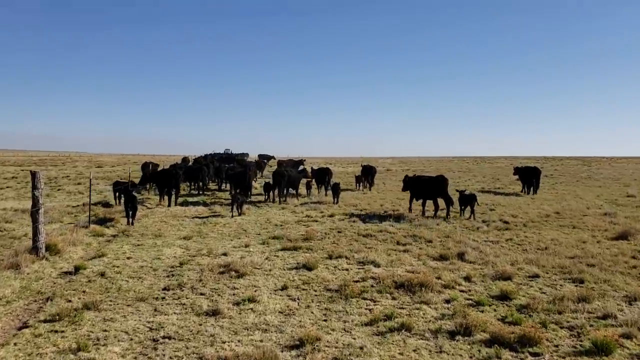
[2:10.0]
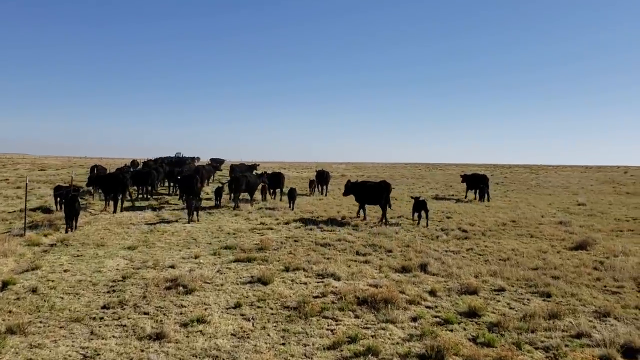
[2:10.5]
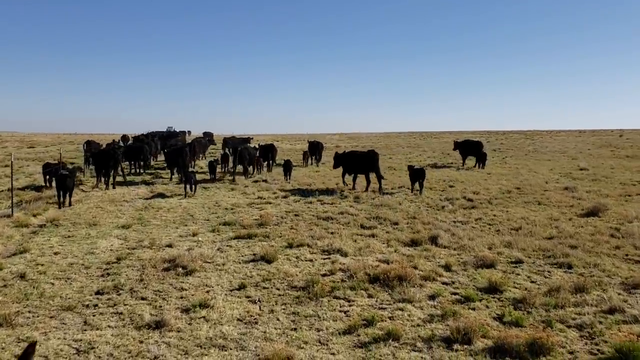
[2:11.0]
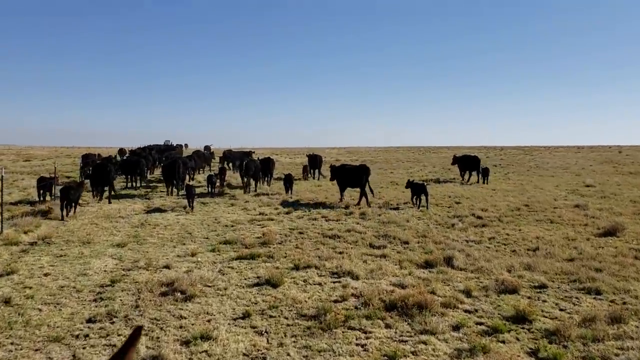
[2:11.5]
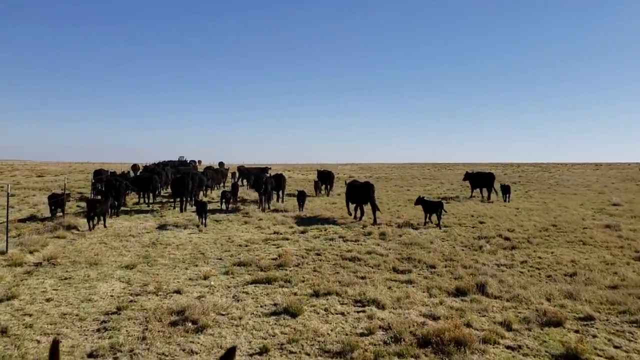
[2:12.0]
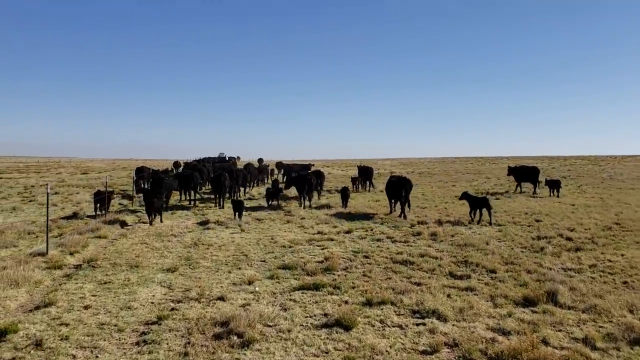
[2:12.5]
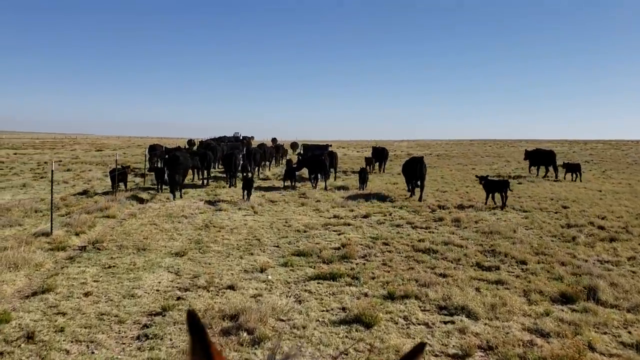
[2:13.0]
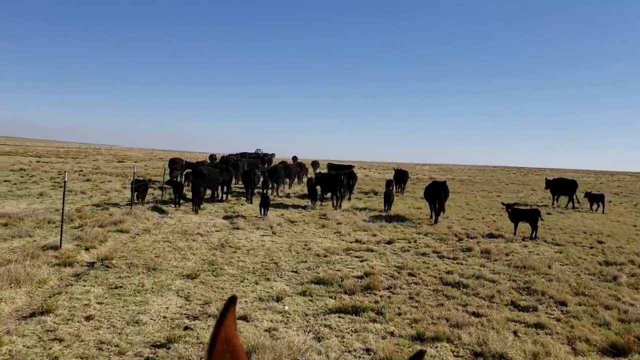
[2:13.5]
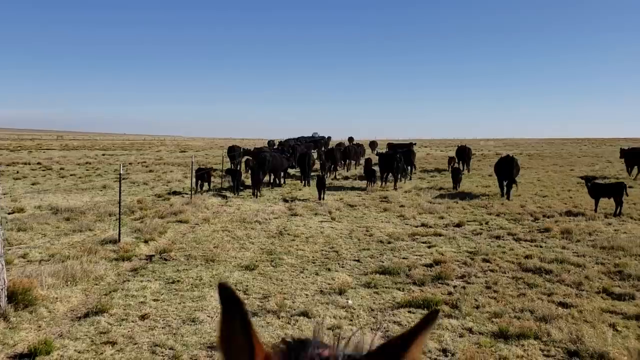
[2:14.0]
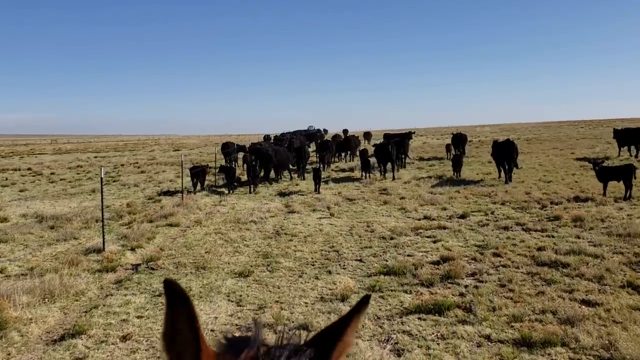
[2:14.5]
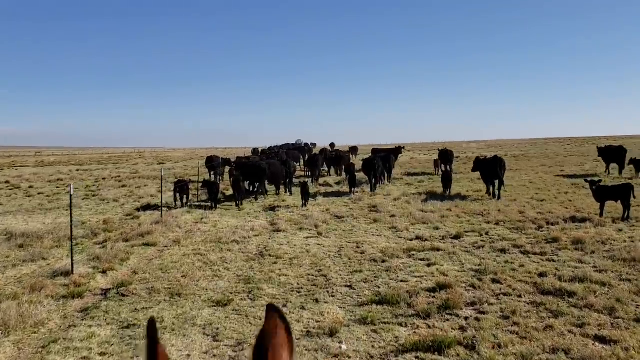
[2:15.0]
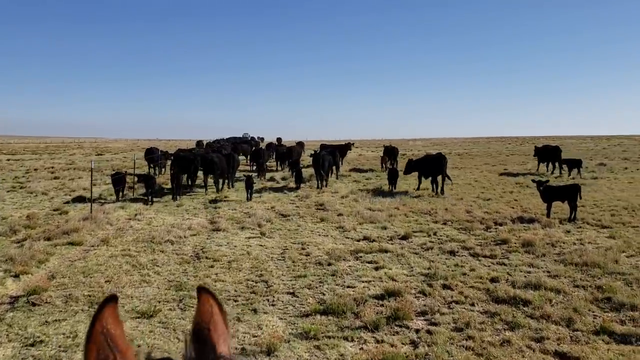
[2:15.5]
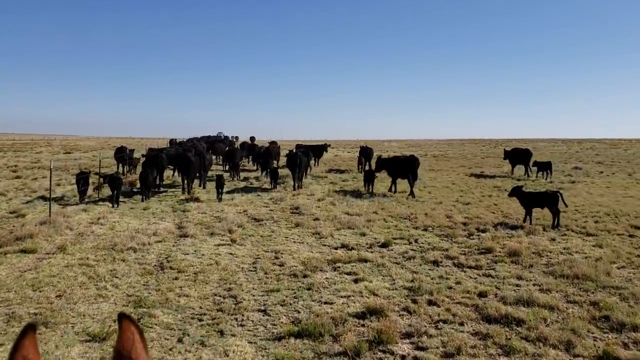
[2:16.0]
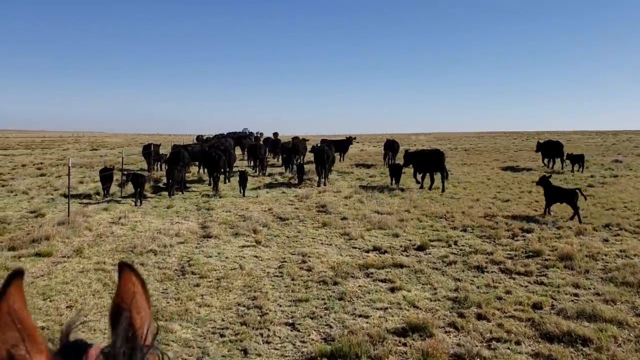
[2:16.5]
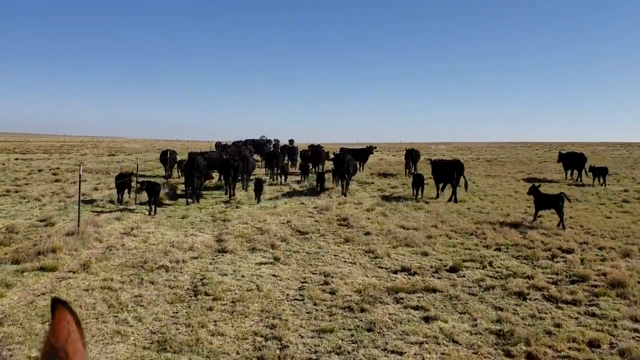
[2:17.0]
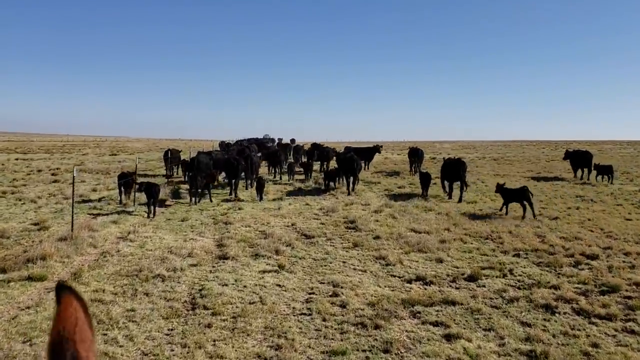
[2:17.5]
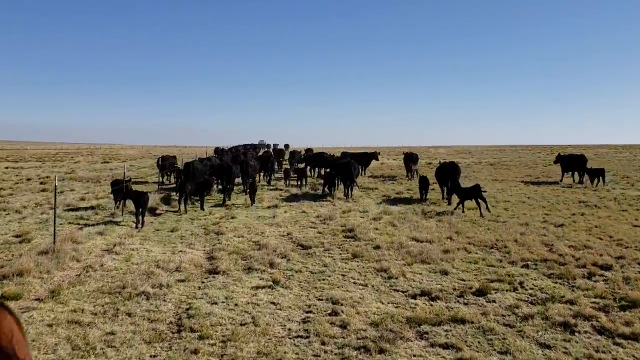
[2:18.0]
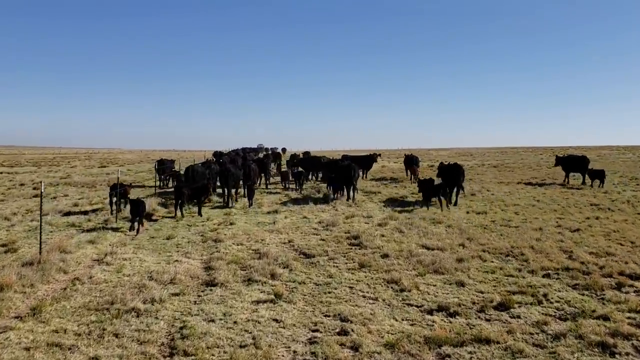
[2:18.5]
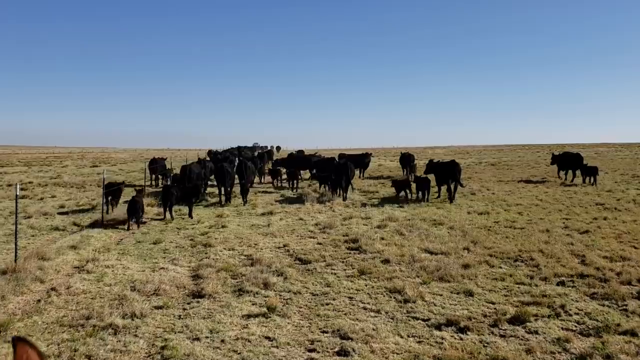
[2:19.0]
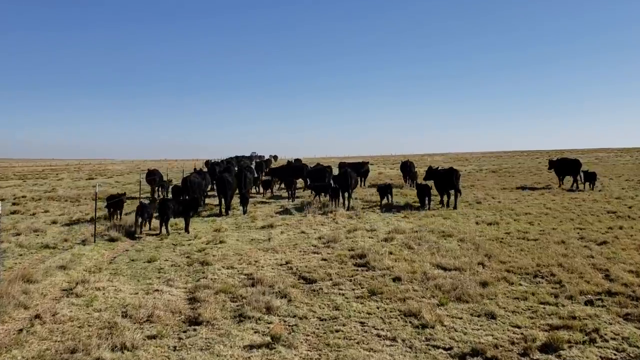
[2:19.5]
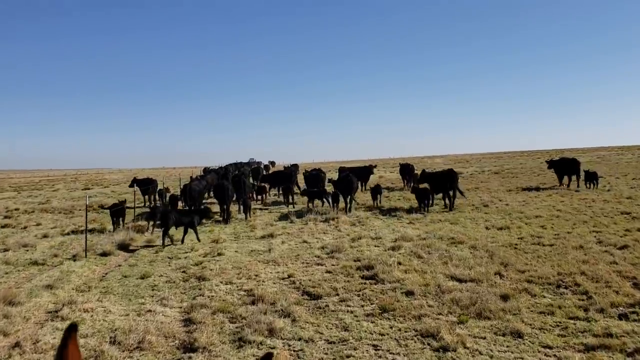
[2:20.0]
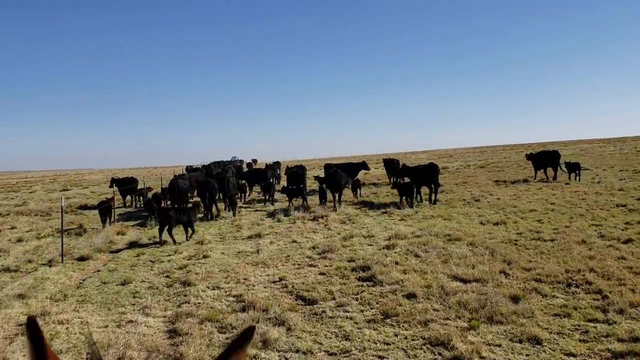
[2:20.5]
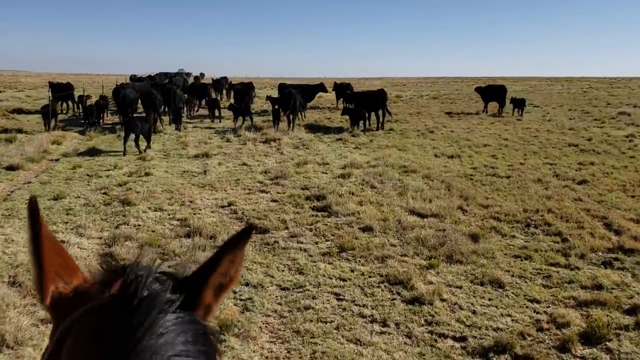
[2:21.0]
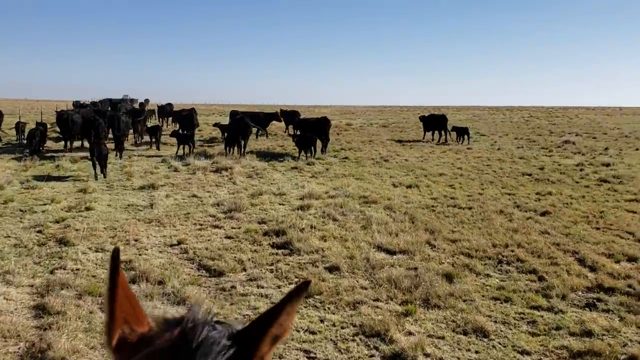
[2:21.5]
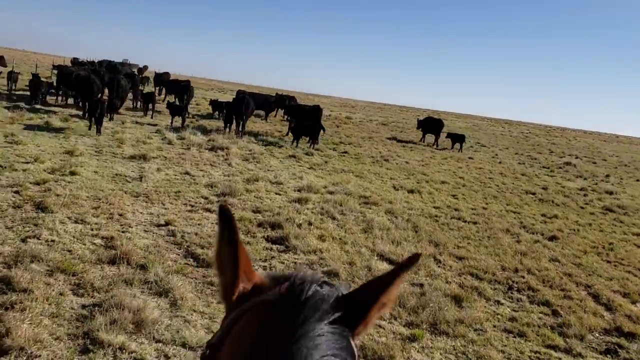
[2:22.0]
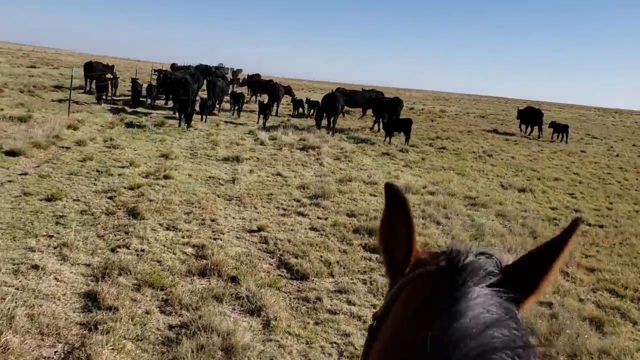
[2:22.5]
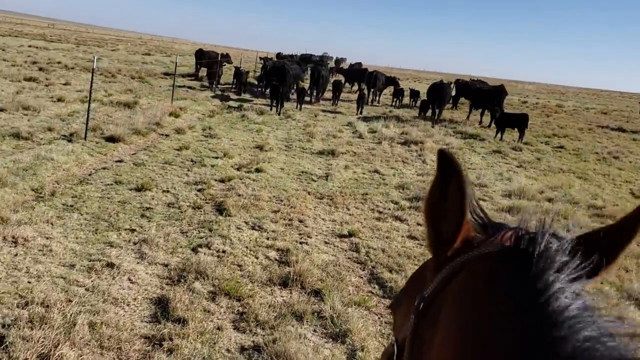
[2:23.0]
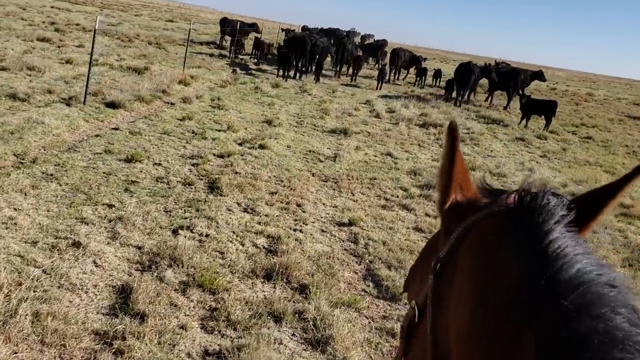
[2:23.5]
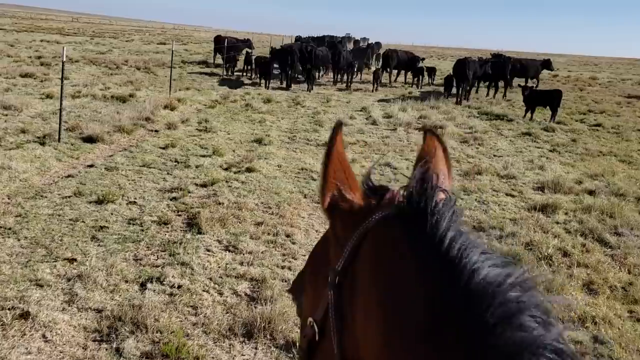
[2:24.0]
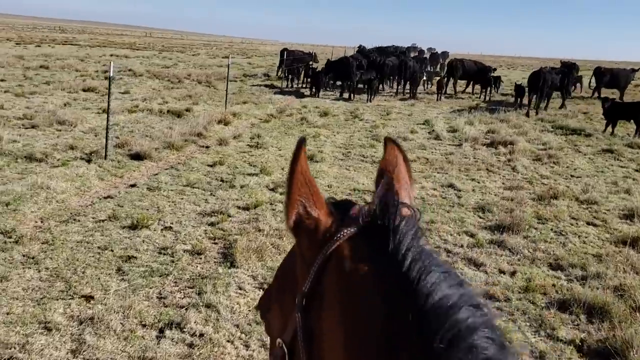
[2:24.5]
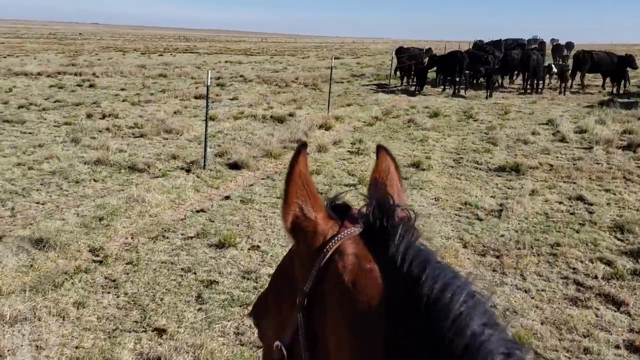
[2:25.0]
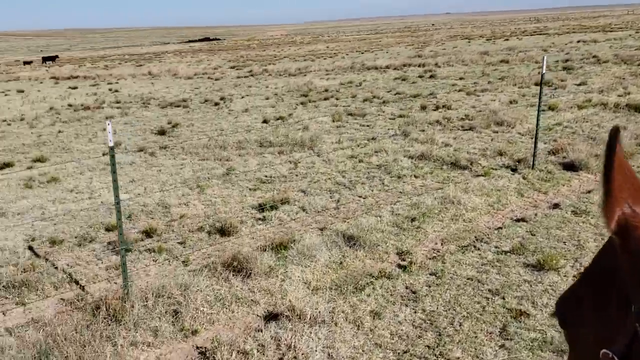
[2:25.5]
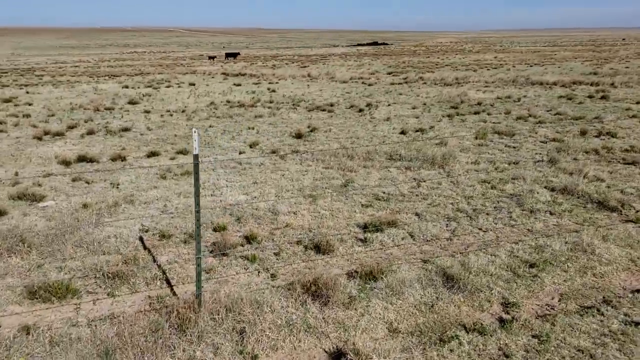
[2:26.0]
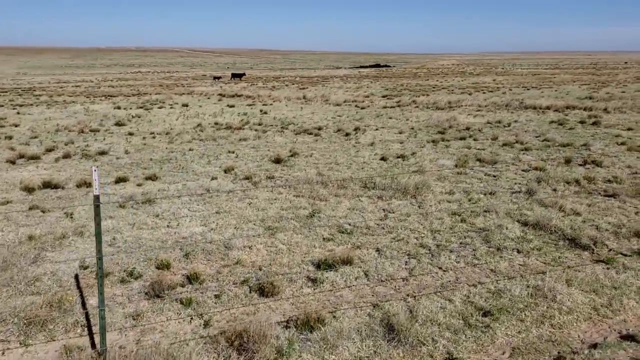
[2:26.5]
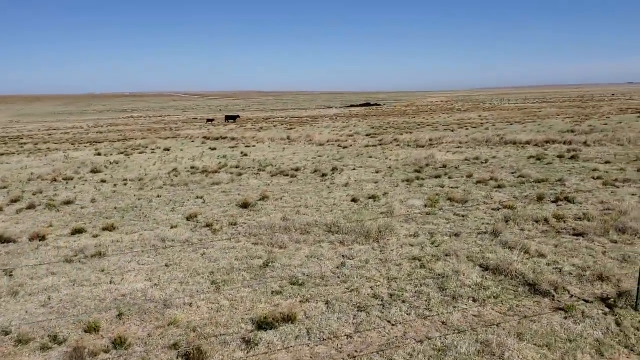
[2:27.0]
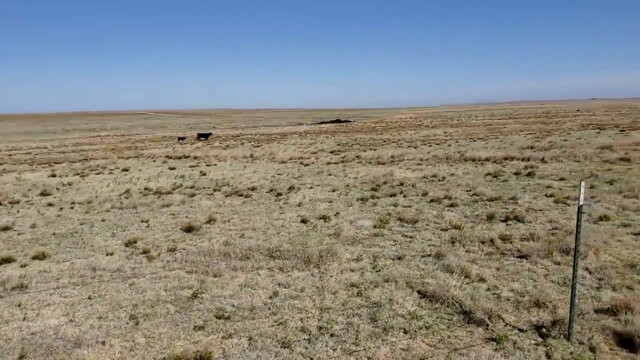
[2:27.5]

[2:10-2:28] The dog is out of sight, apparently going after a few cattle that could not keep up and are far behind. The formation seems to have broken a little, with six cattle to the right instead of in the middle. One cow starts to run when the horse gets close to it. The herd seems to slow down, and the cattle appear to be coming back to the middle. The rancher turns left, where two other cattle are far from the group, maybe about 300 feet away, but still moving forward in the same direction; the rancher apparently keeps them in view to account for the cattle.